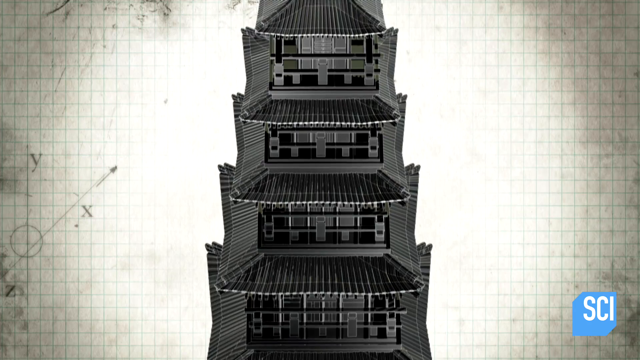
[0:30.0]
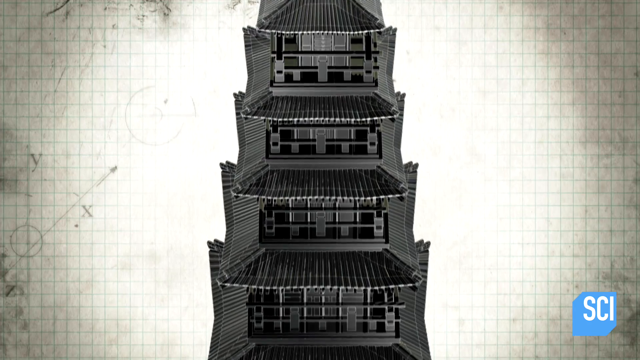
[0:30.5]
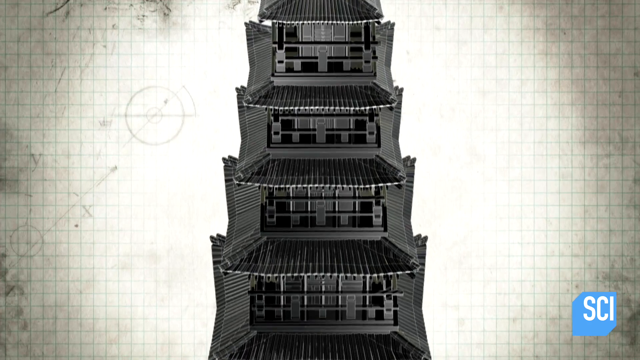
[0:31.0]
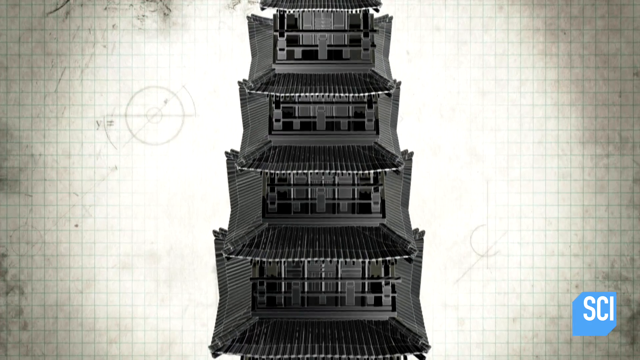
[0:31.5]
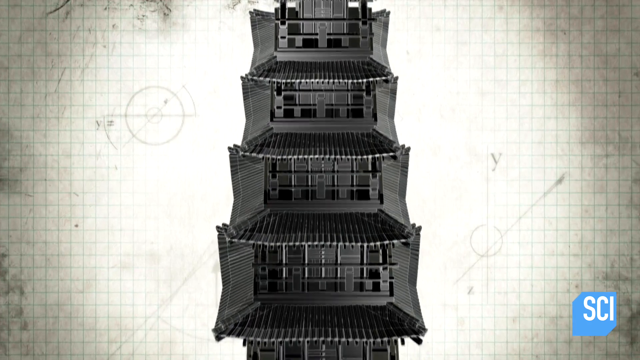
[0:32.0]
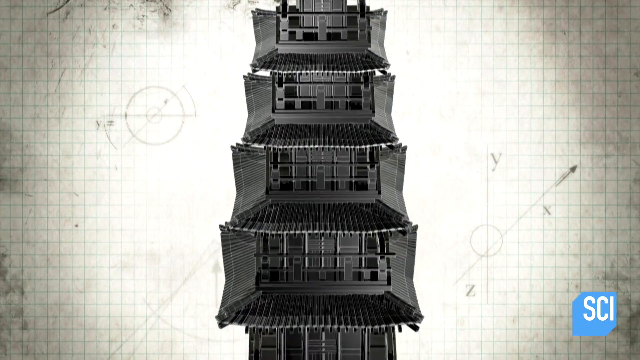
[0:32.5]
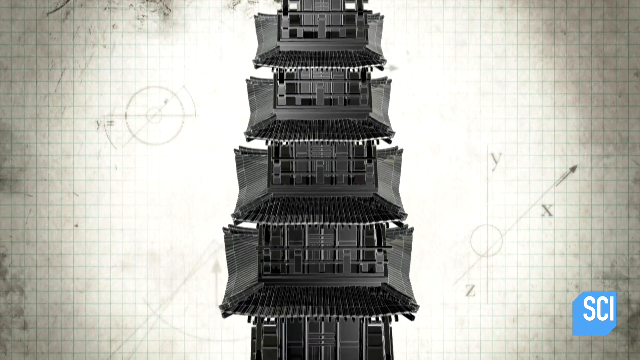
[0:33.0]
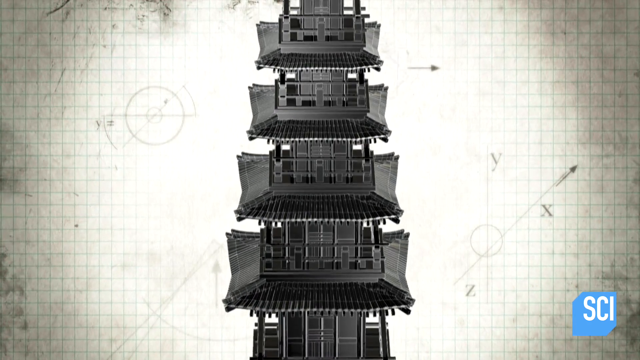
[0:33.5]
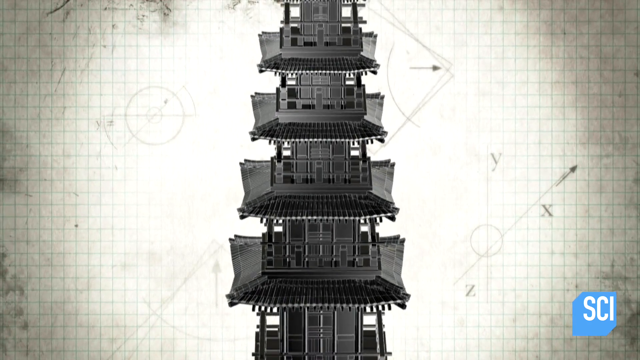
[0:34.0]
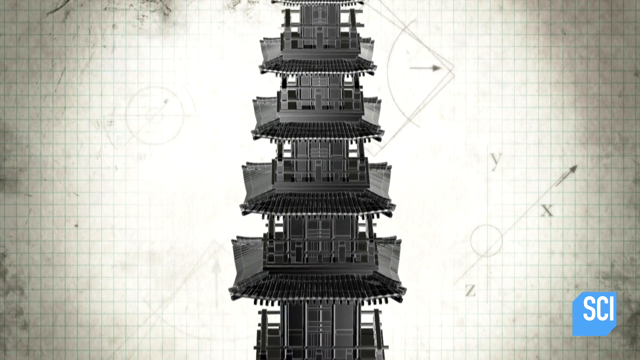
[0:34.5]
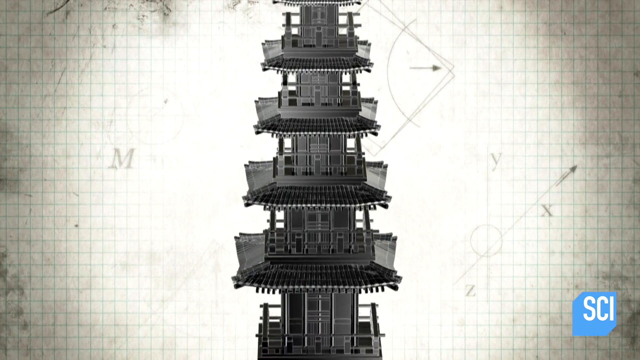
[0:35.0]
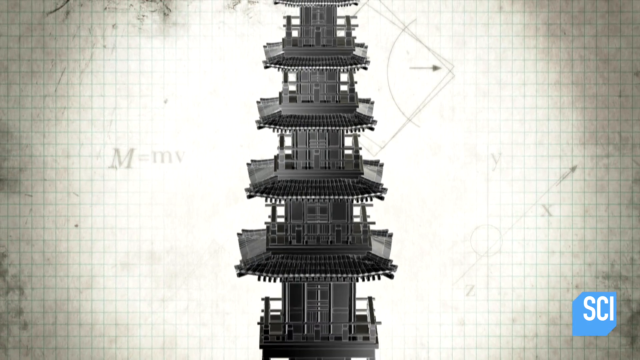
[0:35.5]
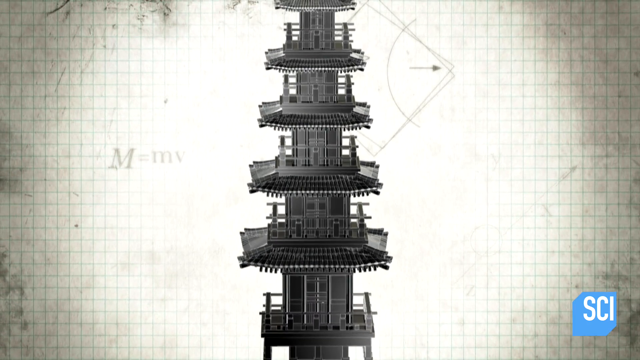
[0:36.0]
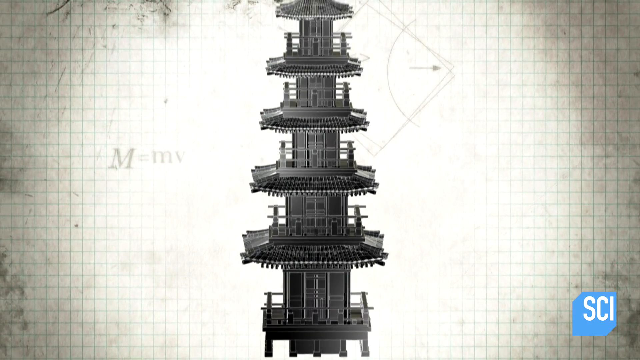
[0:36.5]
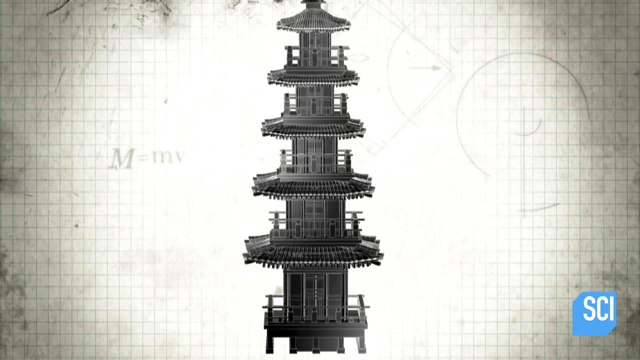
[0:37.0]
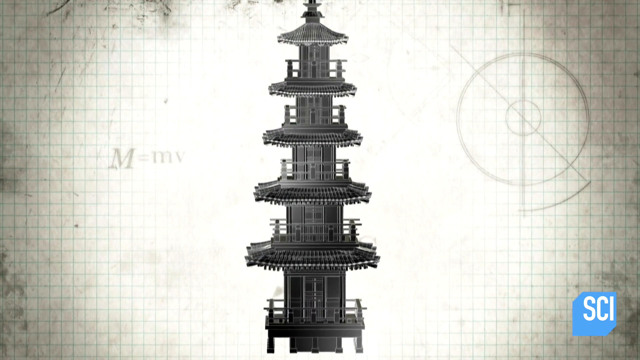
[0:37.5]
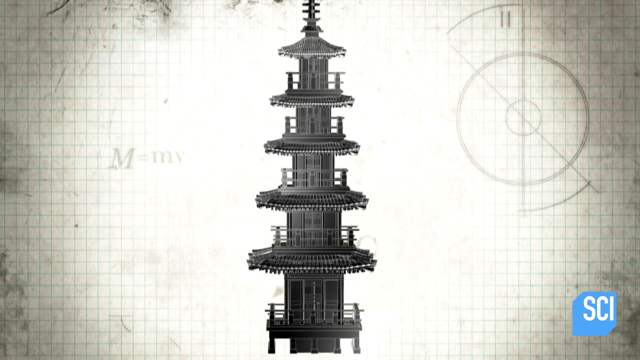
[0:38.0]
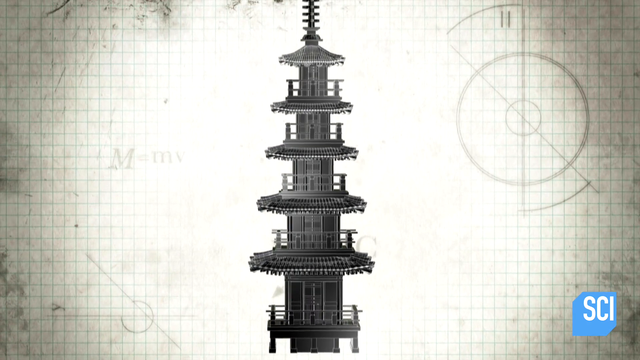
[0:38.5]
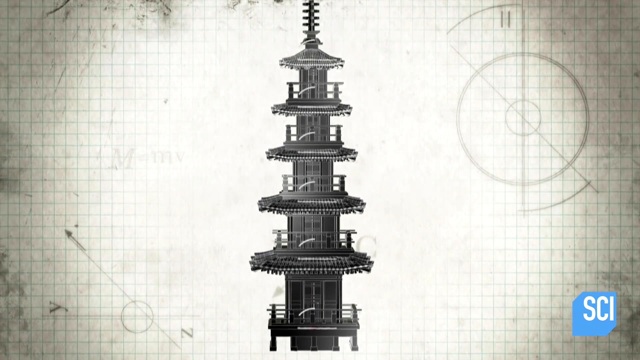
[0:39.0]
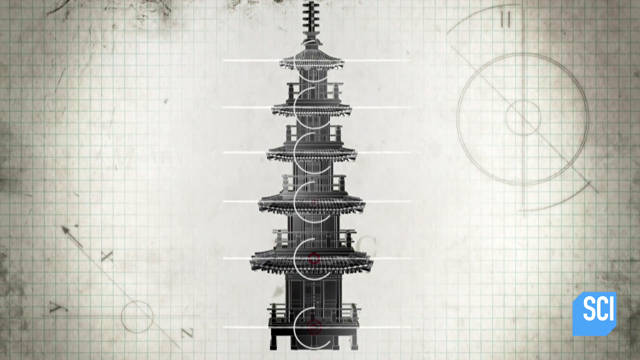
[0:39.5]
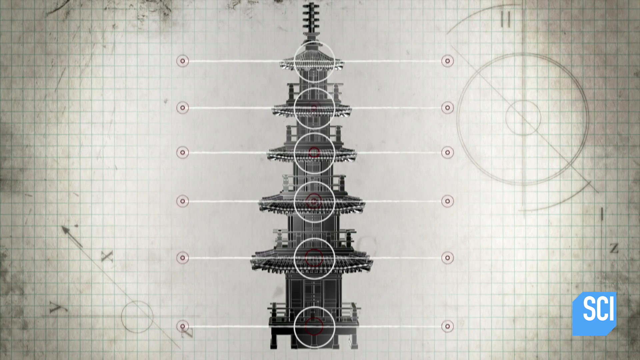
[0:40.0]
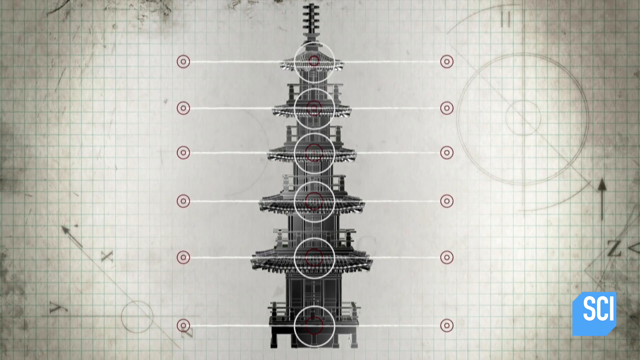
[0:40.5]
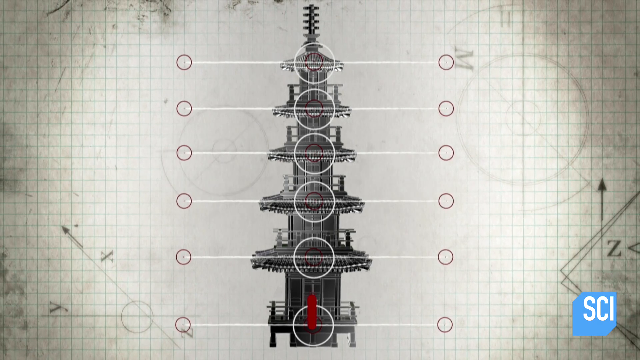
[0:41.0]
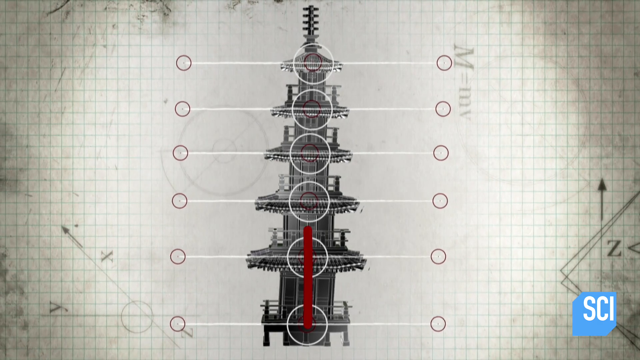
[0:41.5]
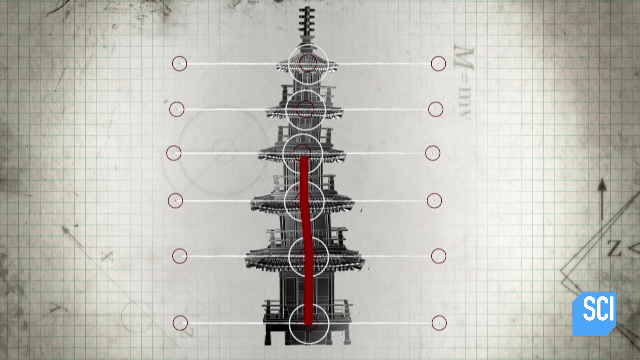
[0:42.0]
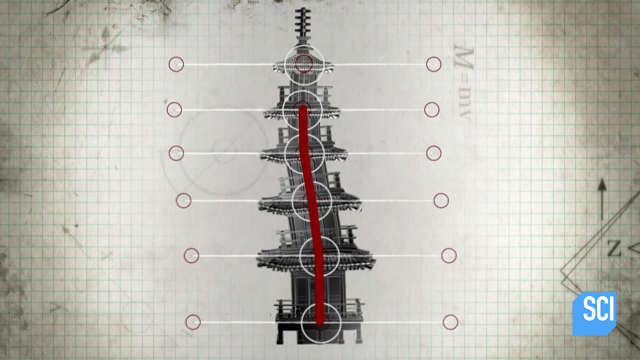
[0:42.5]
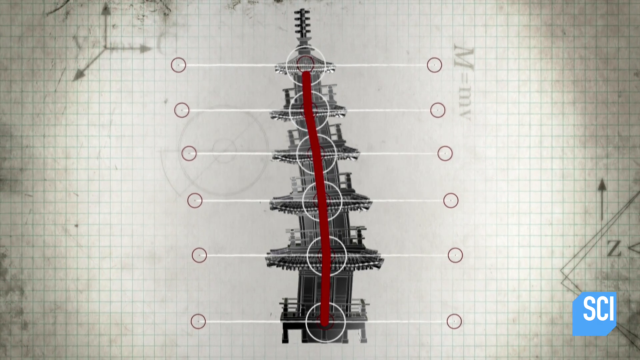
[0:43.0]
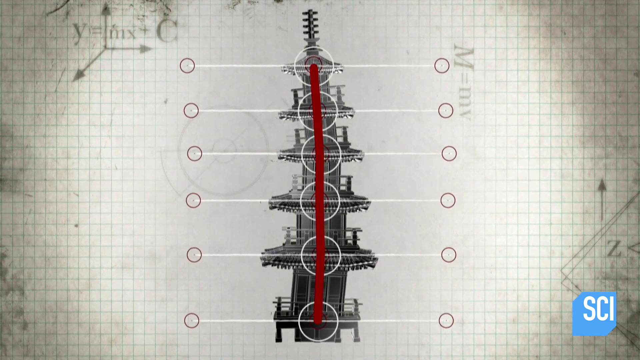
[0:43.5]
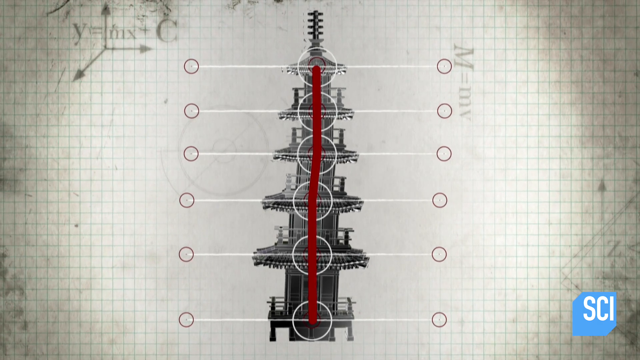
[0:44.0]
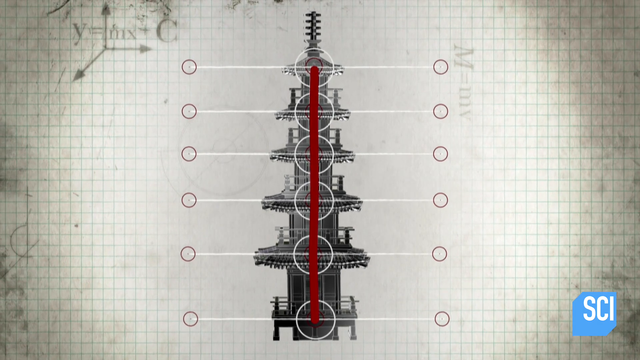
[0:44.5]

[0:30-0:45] What looks to be a blueprint of the building shows six different levels of it. The view starts close and then focuses out, revealing the six different structures of the building. It then pinpoints the middle of the structure, which looks somewhat like a spine, and shows the building moving back and forth as it would in an earthquake. In the back are a lot of equations.